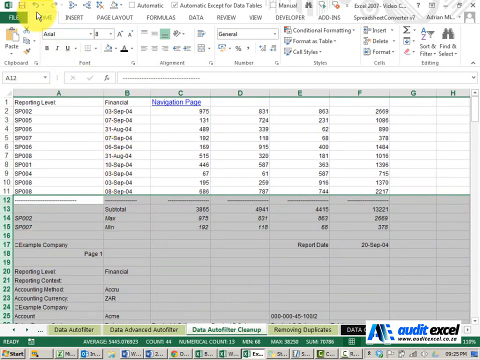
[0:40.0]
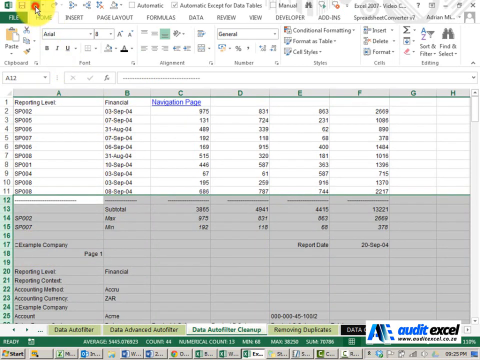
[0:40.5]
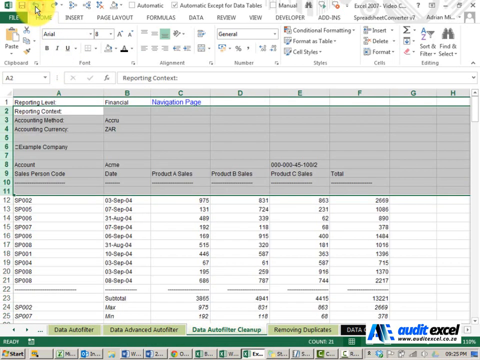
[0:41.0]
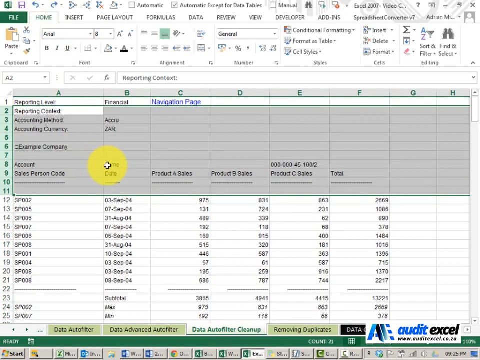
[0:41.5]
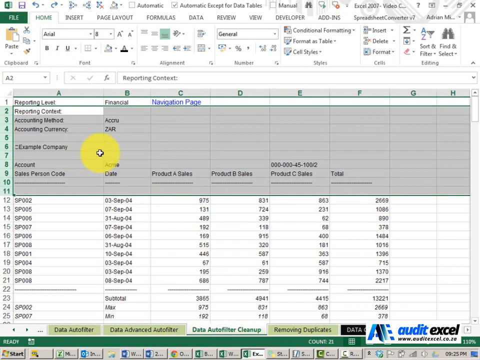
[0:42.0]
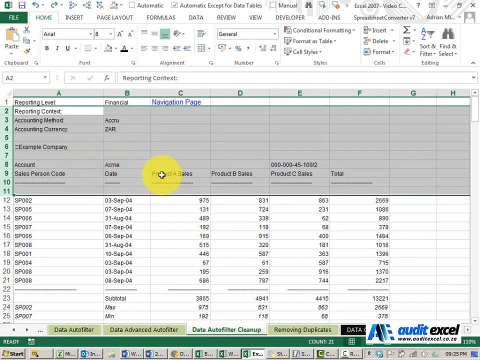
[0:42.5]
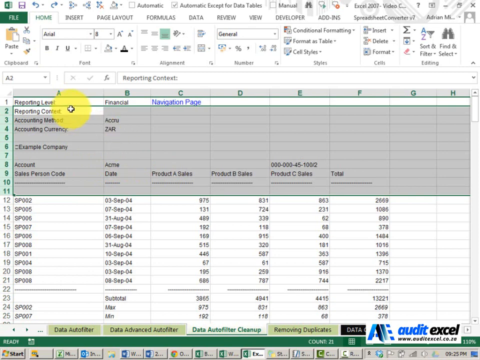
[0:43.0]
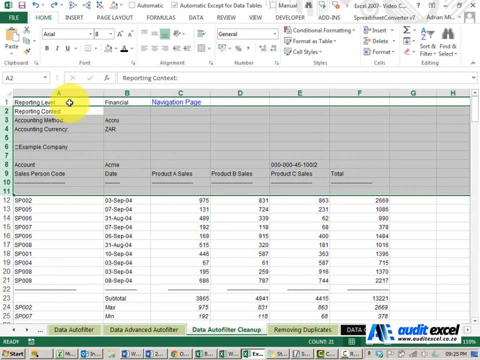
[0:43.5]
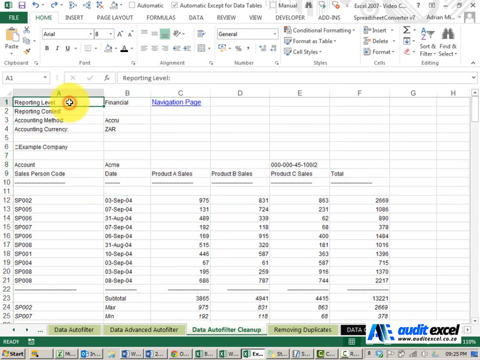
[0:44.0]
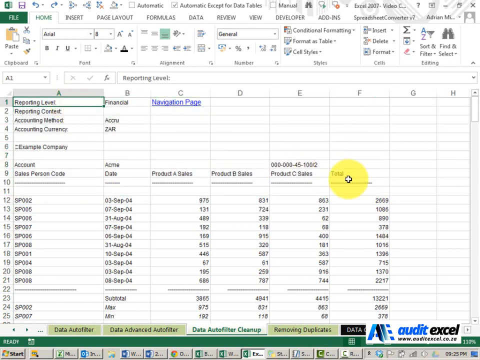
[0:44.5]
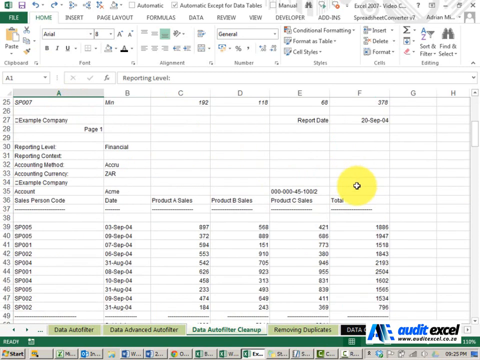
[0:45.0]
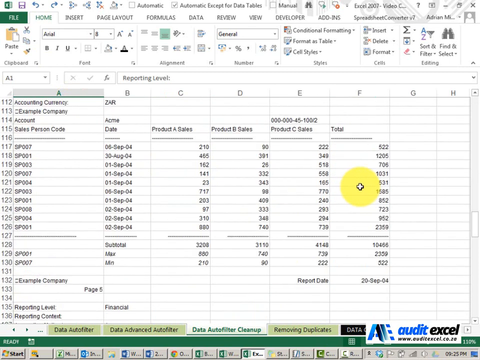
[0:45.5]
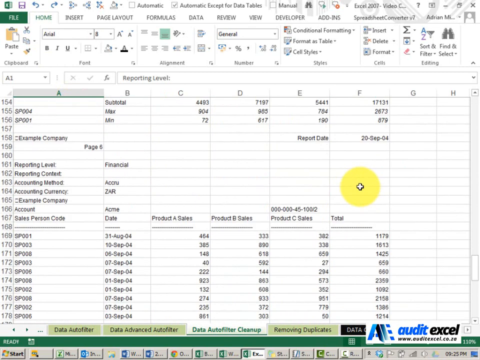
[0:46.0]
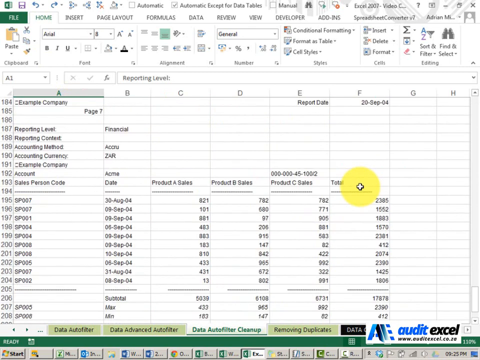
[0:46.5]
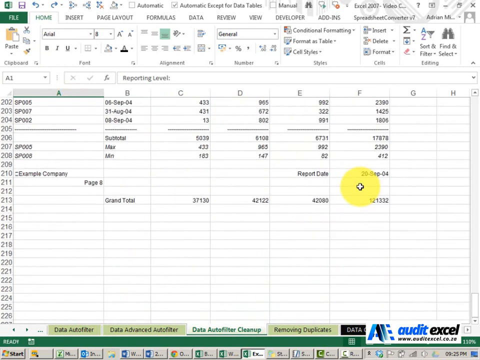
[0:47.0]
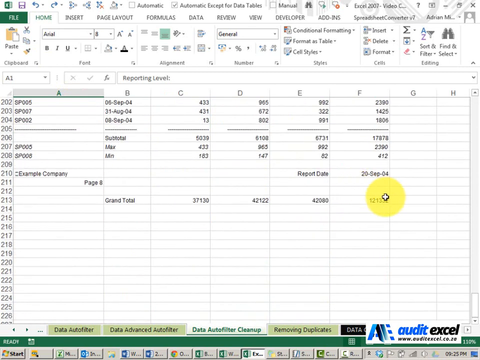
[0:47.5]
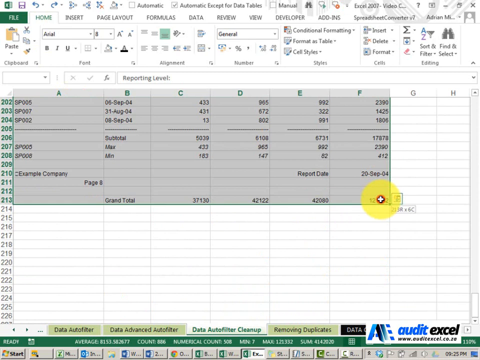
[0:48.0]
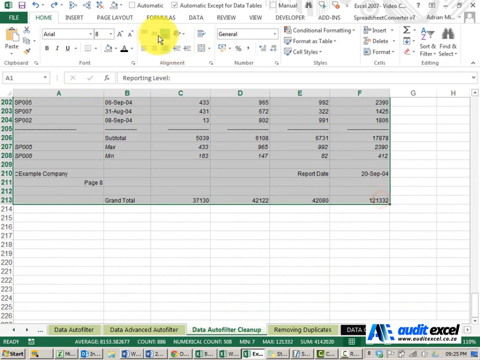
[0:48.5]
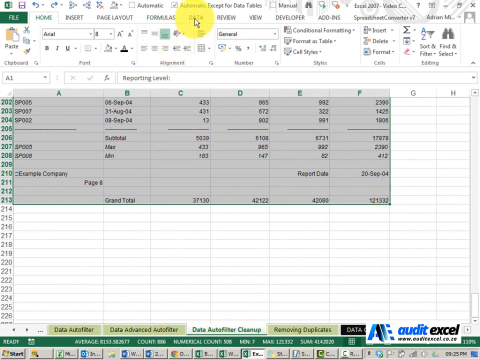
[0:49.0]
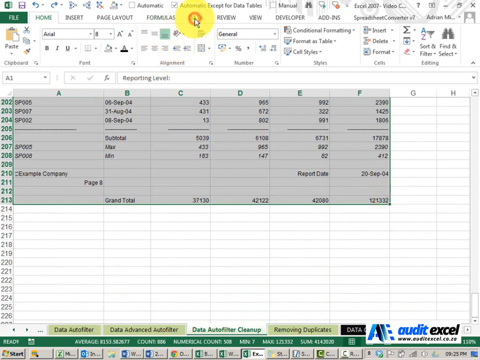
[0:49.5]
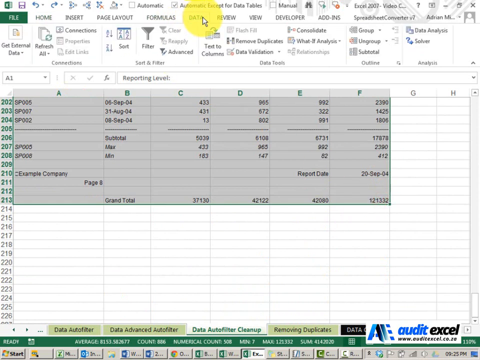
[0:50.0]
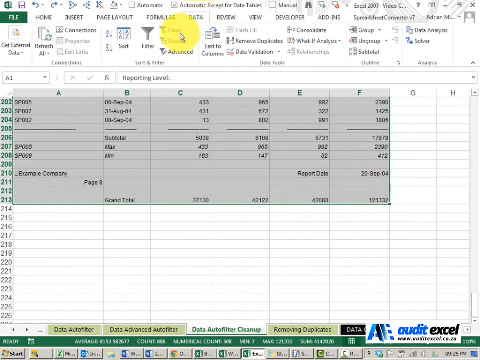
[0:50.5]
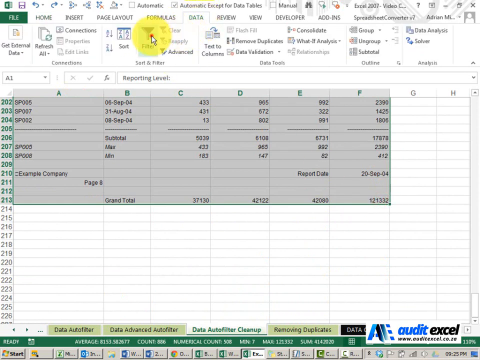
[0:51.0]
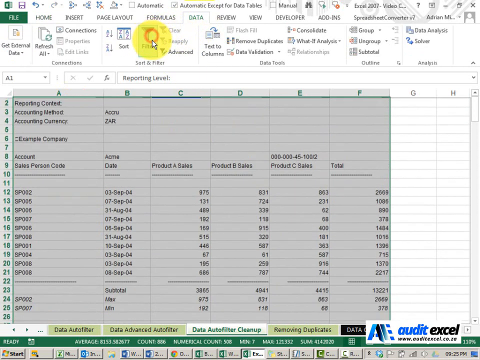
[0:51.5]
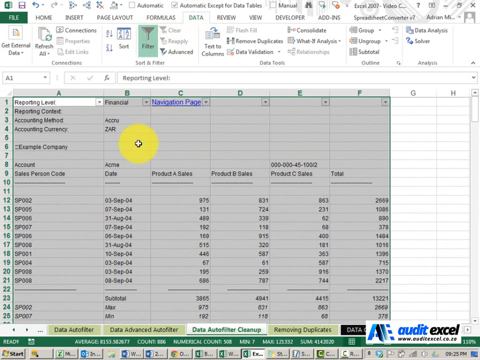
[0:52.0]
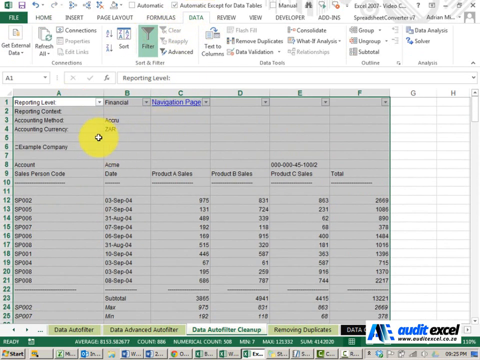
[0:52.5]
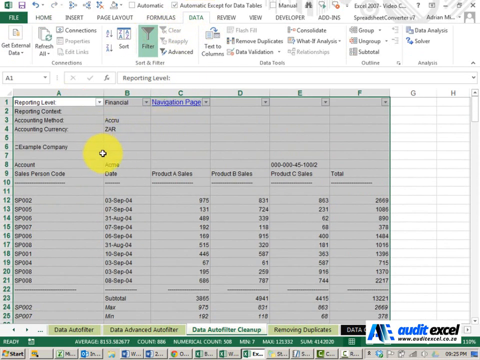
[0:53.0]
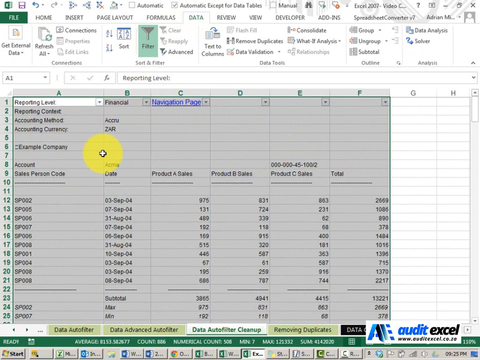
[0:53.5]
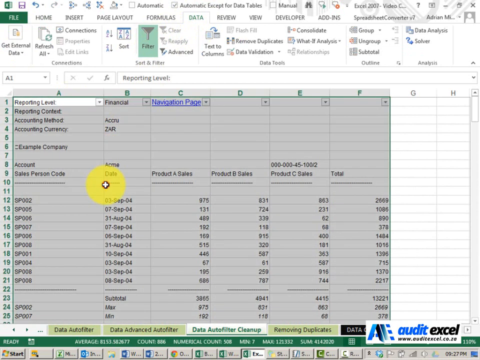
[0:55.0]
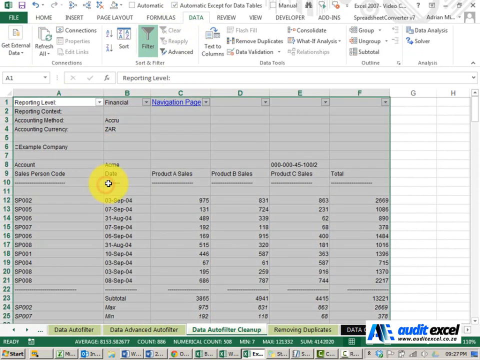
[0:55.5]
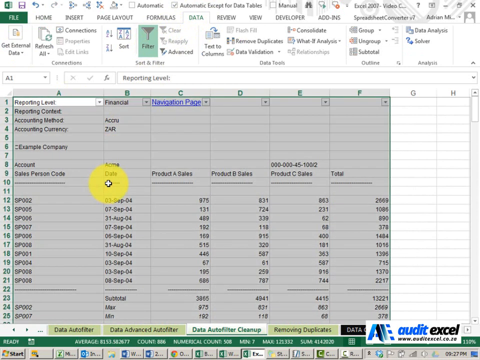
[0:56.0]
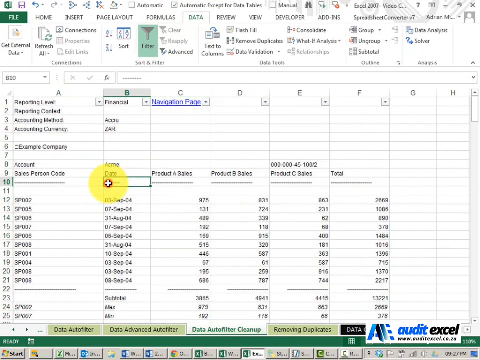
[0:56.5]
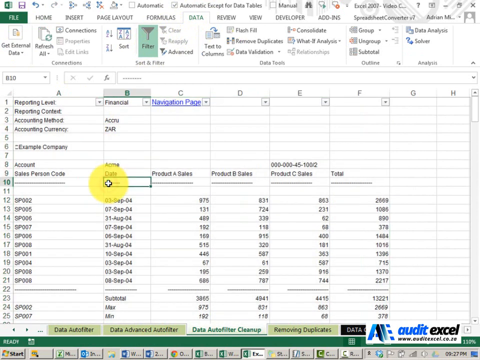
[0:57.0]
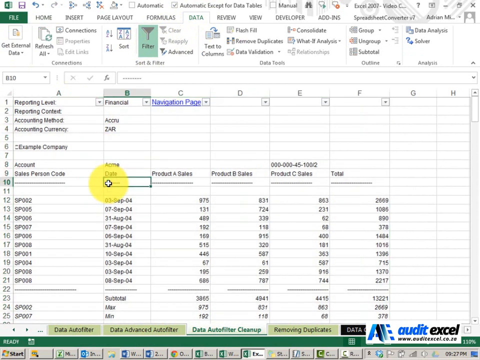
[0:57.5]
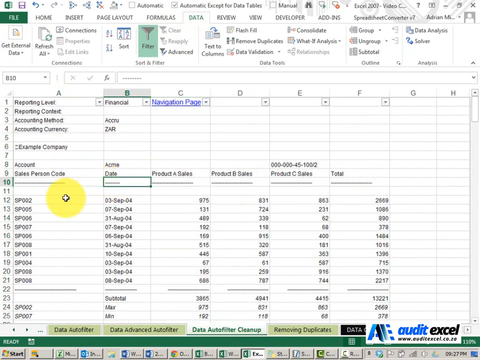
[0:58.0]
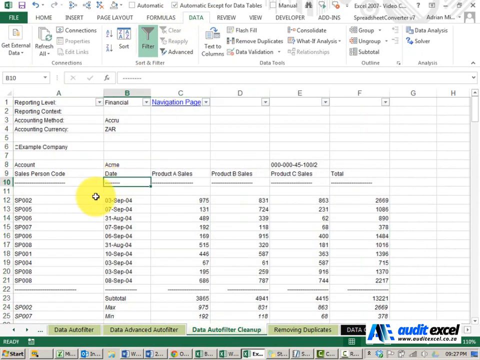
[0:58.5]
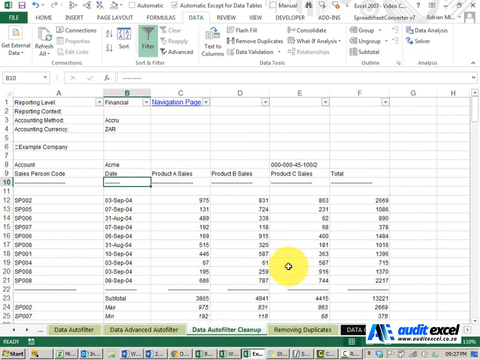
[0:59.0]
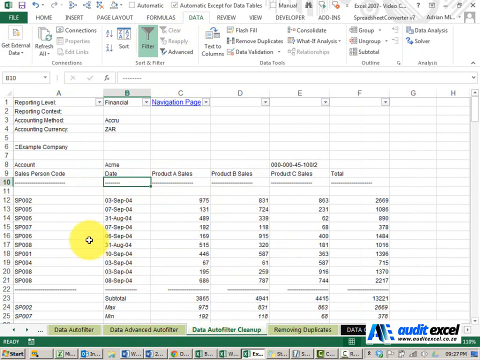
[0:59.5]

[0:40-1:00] After the cut and paste is undone, the view scrolls down the document, which is called "data auto filter cleanup". Basically the entire document is highlighted and filter is selected to filter something out; this is undone. The data is highlighted again while scrolling down, and filtering is applied again. The data tab across the top of the document is clicked. The spreadsheet is Excel 2007 and looks like a typical Excel spreadsheet.